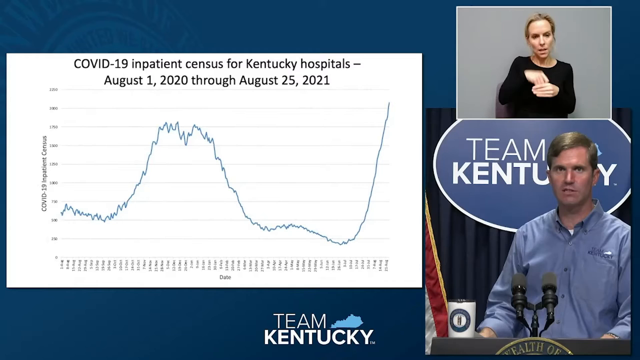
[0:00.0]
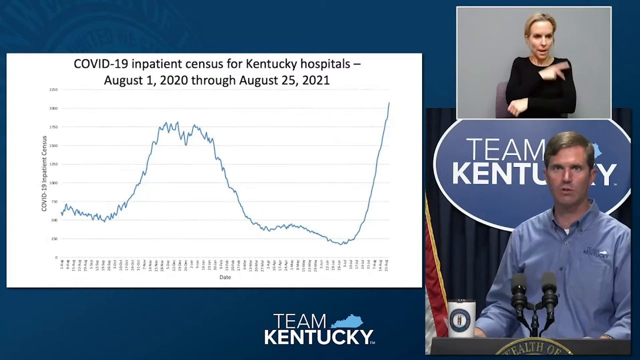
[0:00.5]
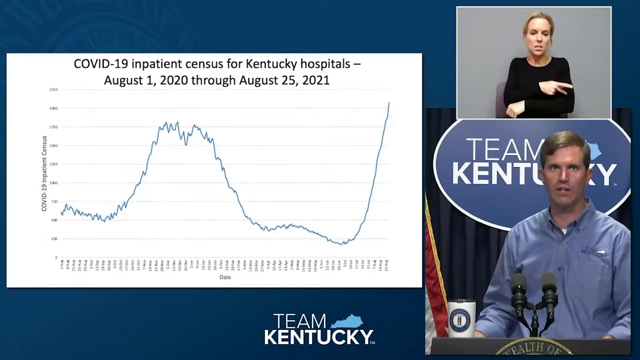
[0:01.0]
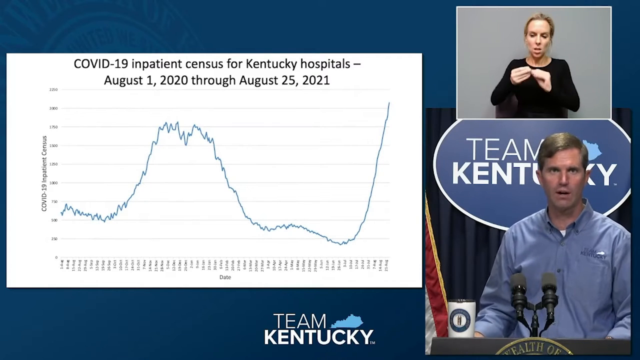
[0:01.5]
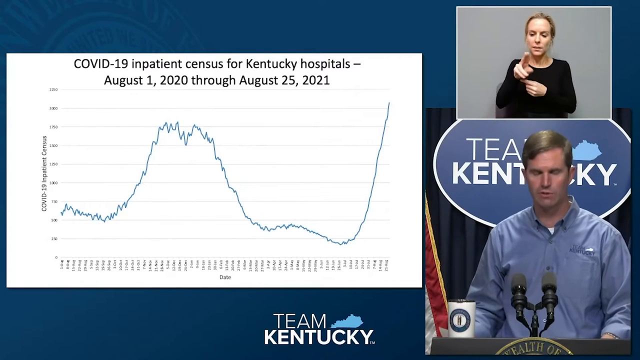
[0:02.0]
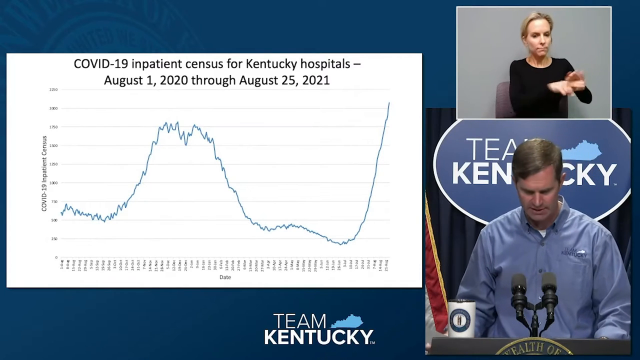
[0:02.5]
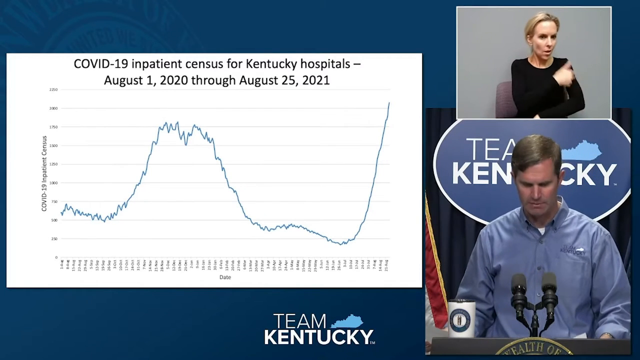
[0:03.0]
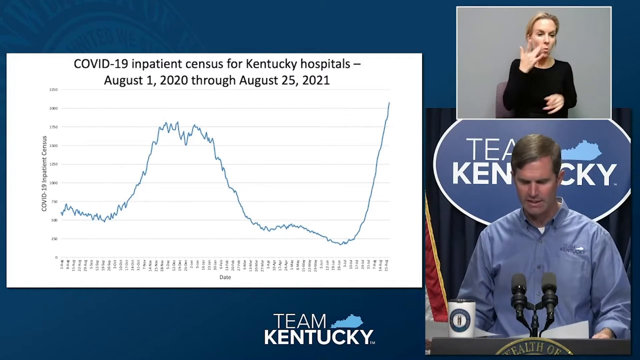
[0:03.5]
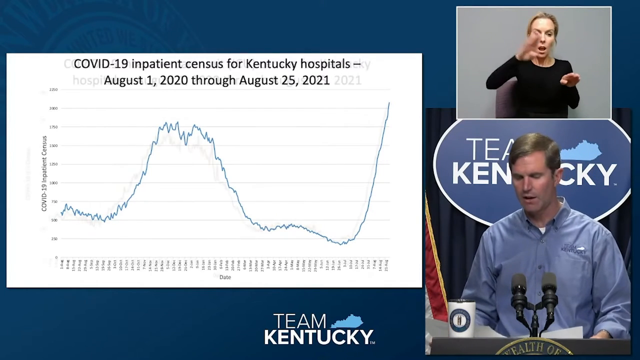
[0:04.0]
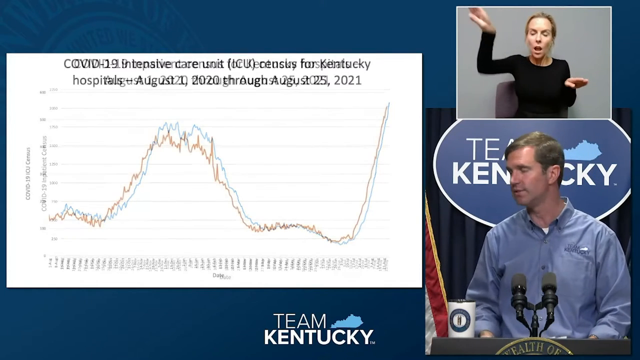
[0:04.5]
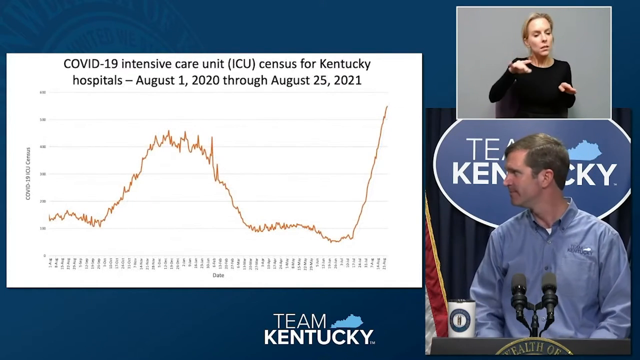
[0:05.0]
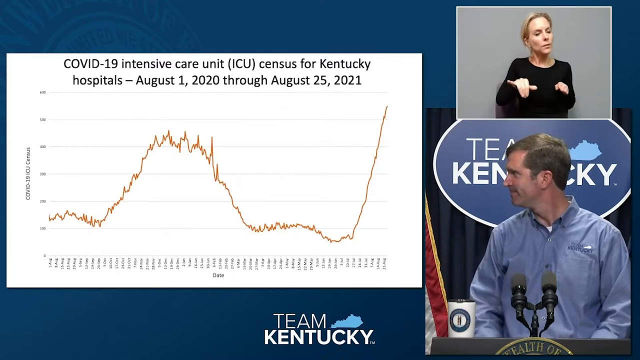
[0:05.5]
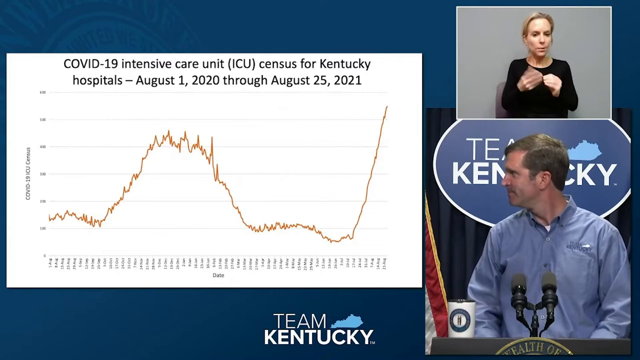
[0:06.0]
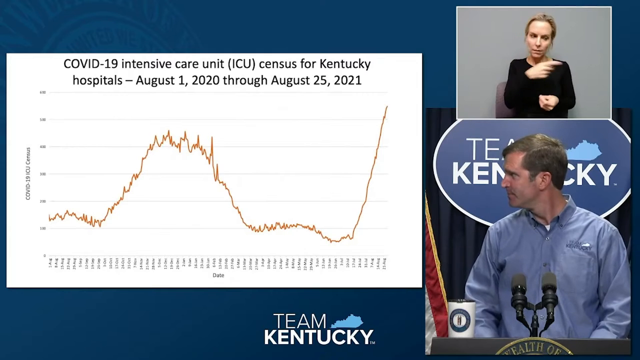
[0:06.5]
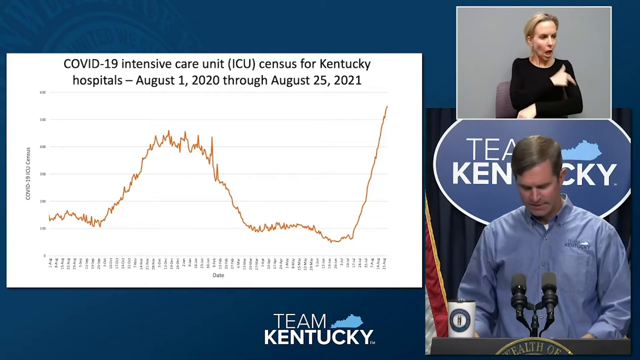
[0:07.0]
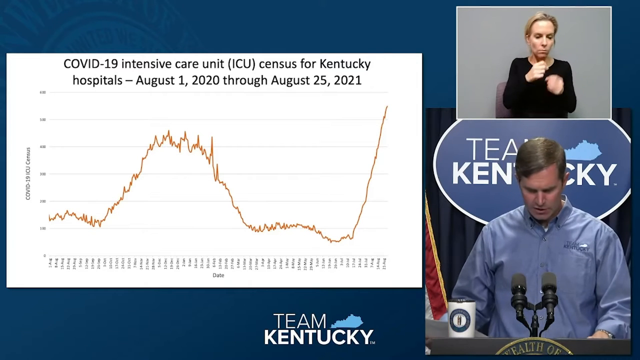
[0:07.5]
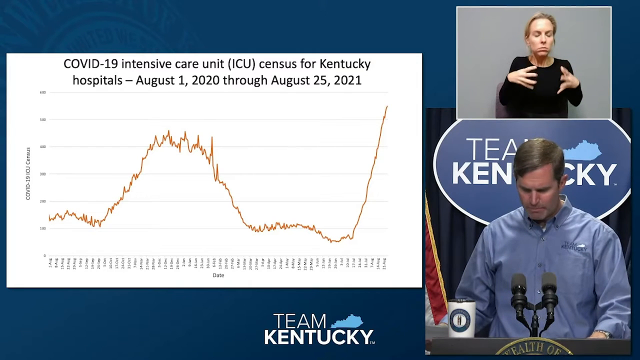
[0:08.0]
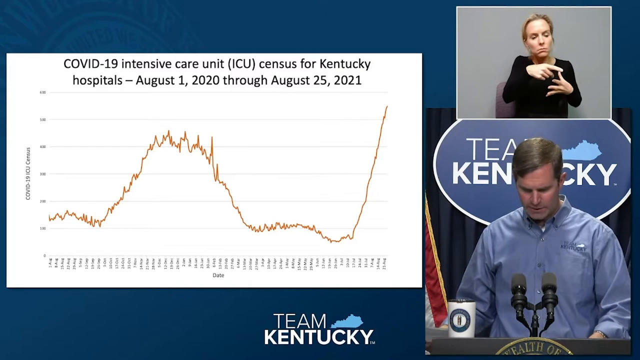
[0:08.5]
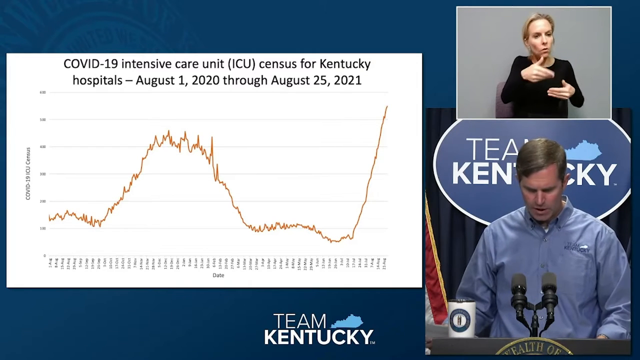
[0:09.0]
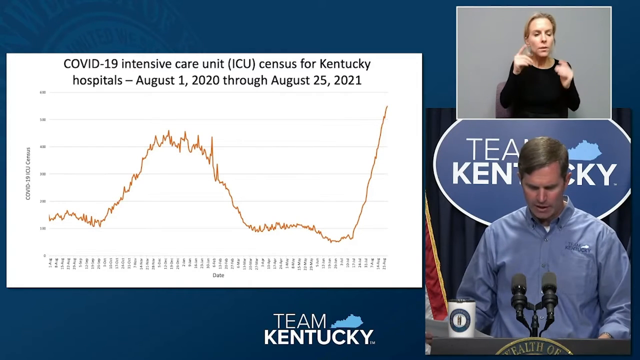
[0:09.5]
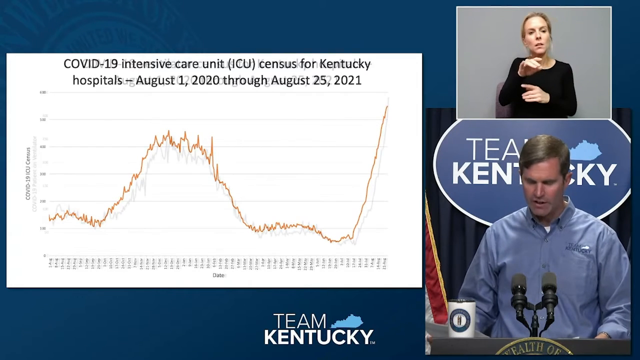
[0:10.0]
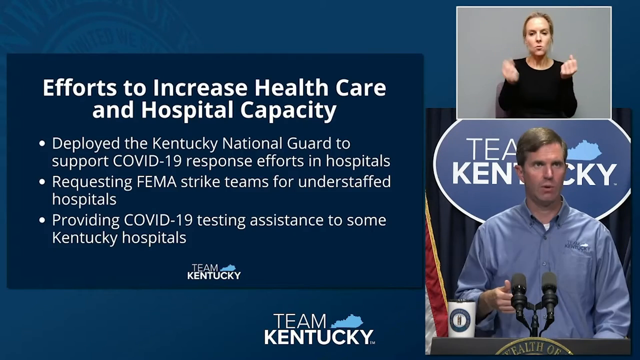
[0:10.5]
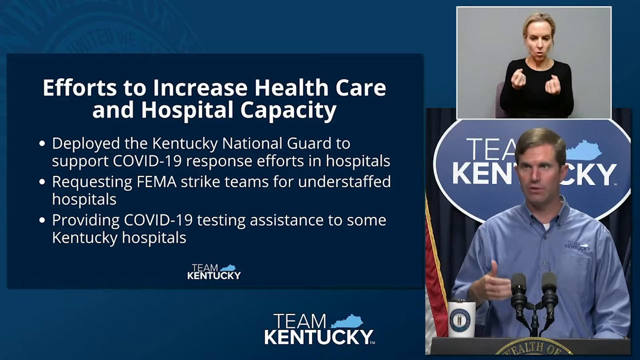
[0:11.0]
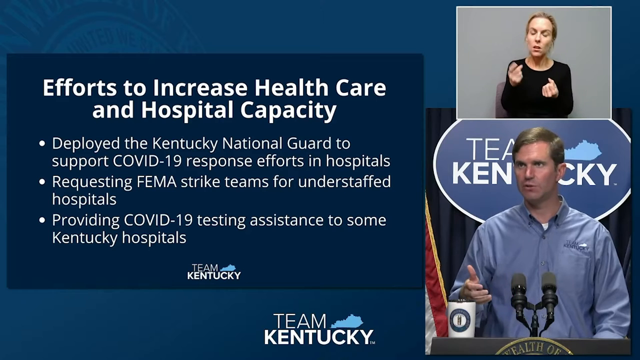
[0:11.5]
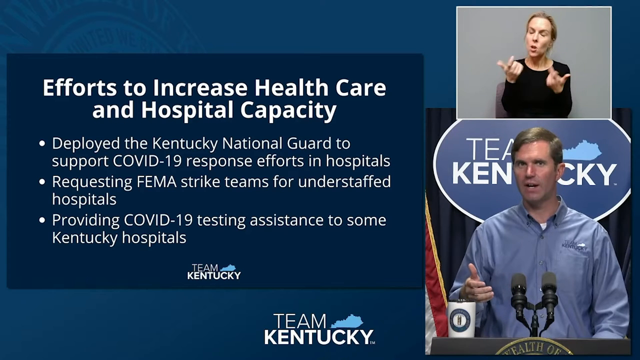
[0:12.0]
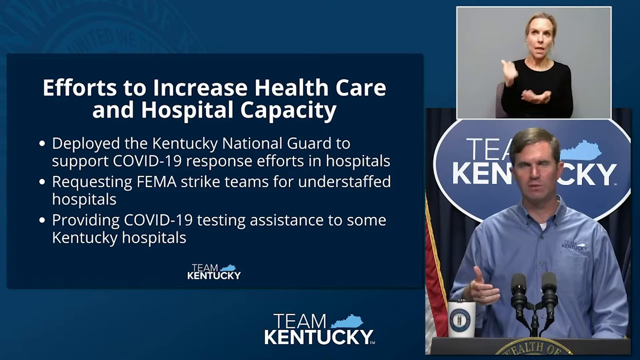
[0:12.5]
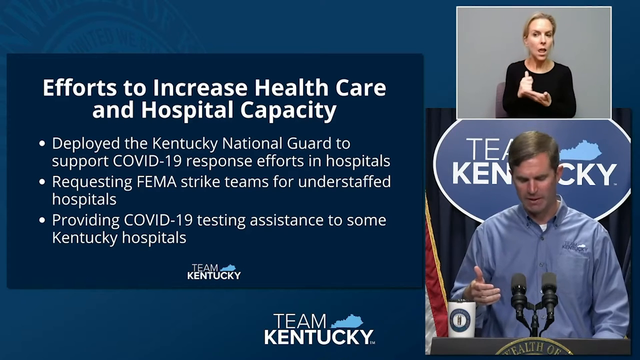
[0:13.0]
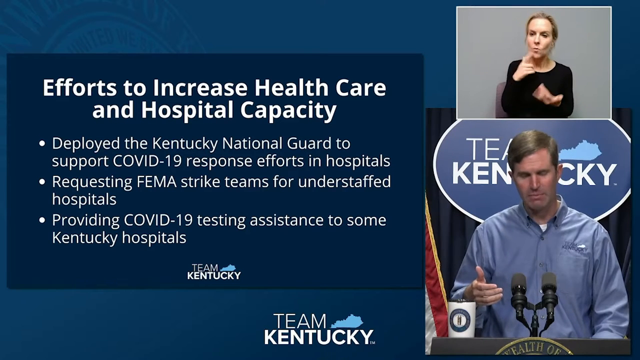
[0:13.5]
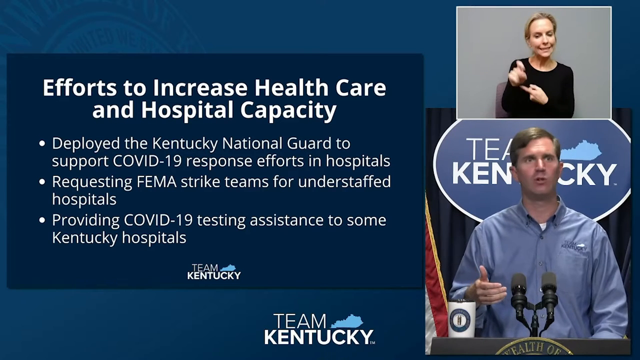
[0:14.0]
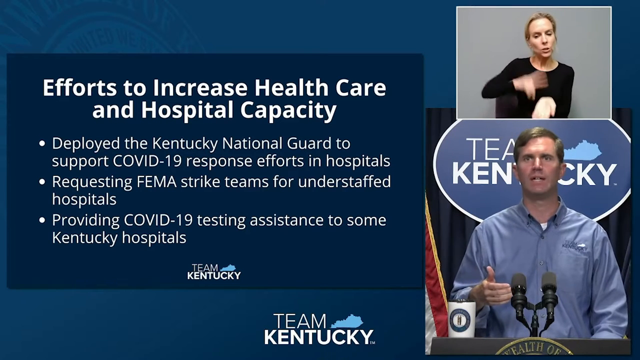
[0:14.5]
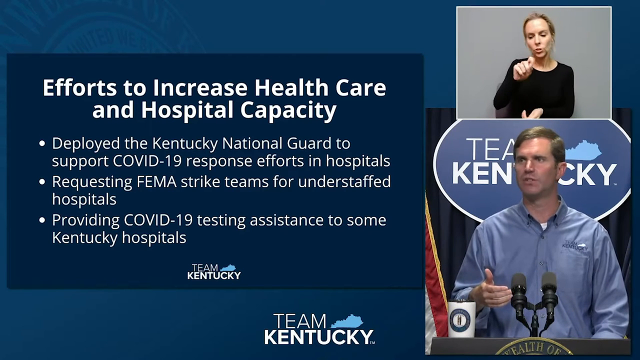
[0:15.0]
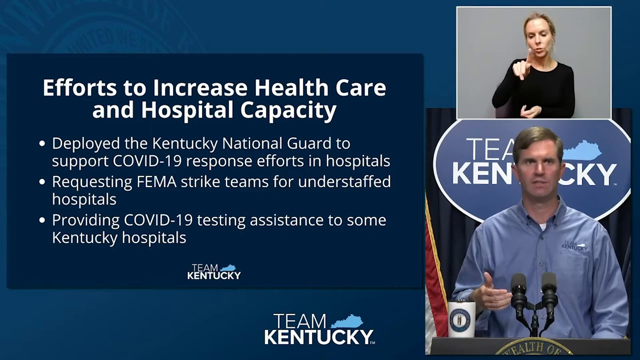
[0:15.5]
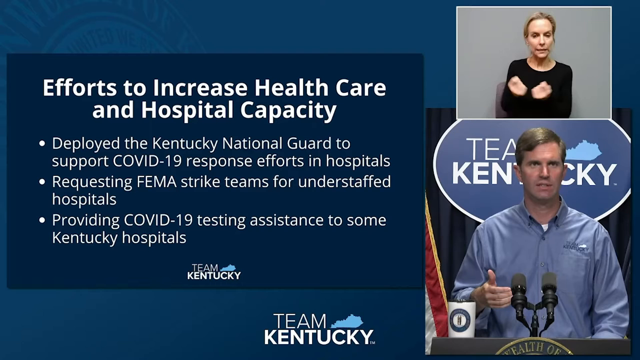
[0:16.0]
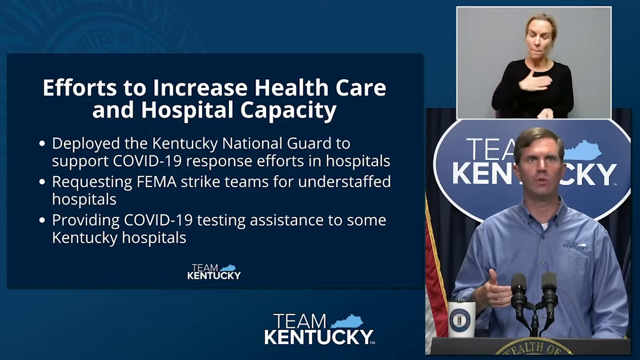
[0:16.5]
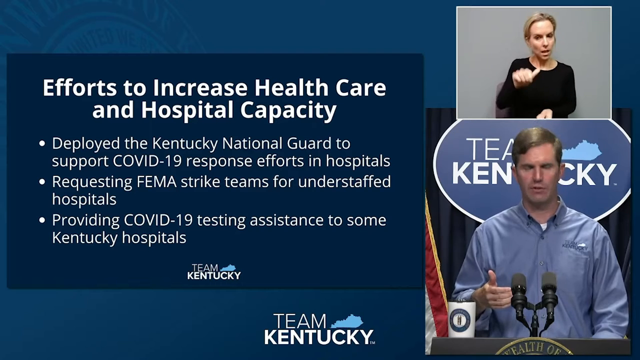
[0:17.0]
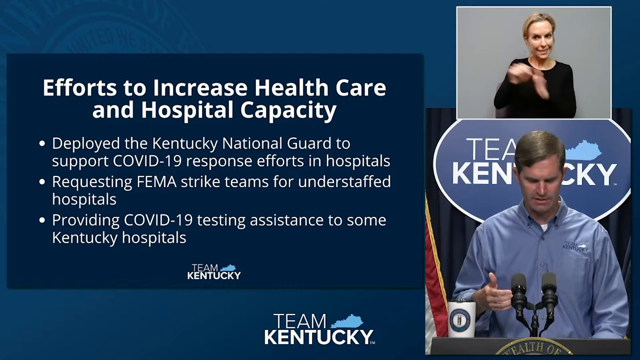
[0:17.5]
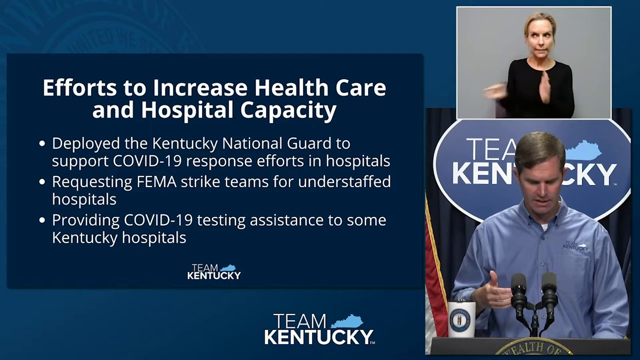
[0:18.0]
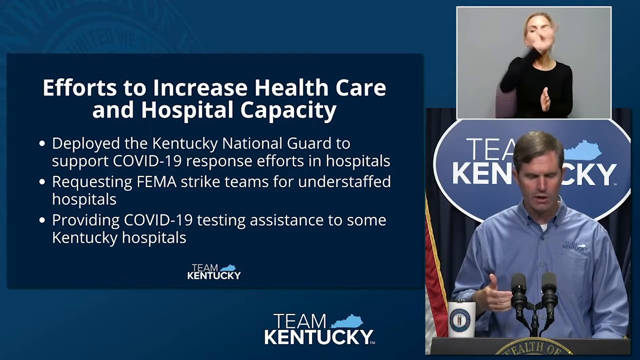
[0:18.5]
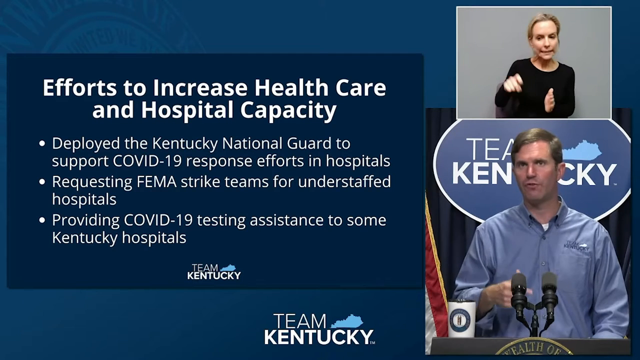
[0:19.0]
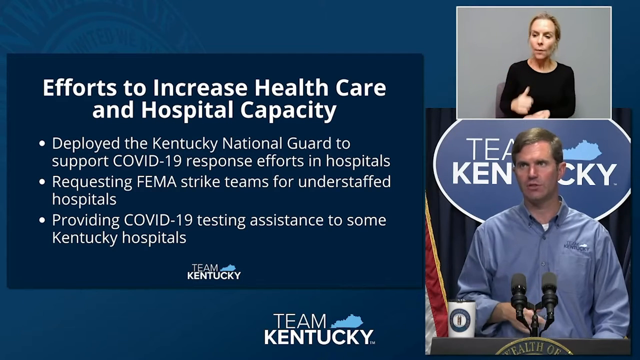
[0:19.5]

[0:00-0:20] A graph of the COVID-19 inpatient census for Kentucky hospitals from August 1st, 2020 through August 25th, 2021 is on the left side of the screen. In a box at the top, a person does sign language for deaf viewers. A message then pops up that says "efforts to increase health care and hospital capacity," with three bullet points: "deployed the Kentucky National Guard to support COVID-19 response efforts in hospitals," "requesting FEMA strike teams for understaffed hospitals," and "providing COVID-19 testing assistance to some Kentucky hospitals." A man in the lower right-hand corner, who might be the governor, has "Team Kentucky" behind his head. As he talks, the woman in the upper right corner does the sign language.